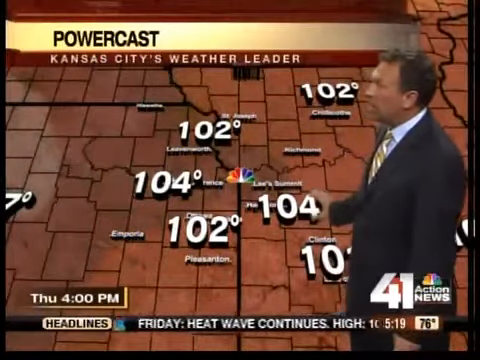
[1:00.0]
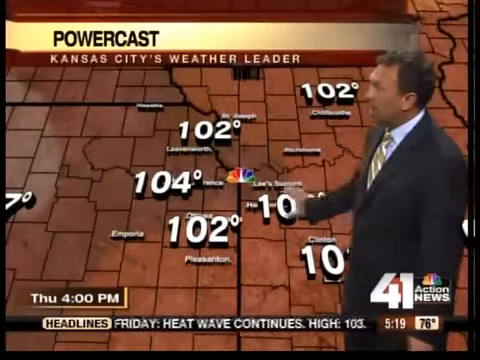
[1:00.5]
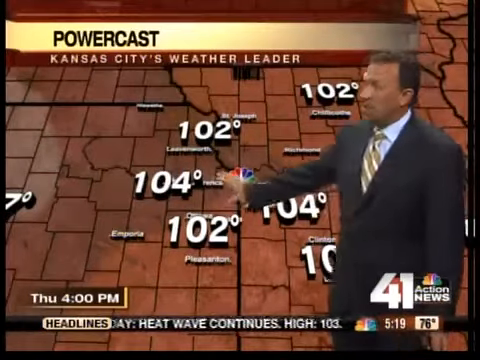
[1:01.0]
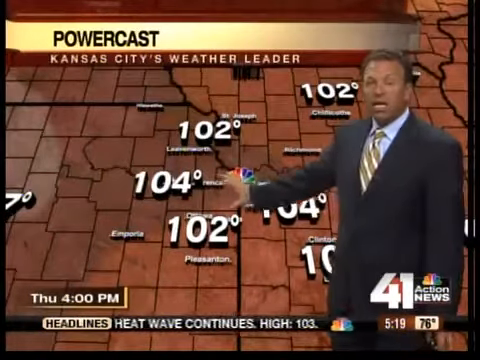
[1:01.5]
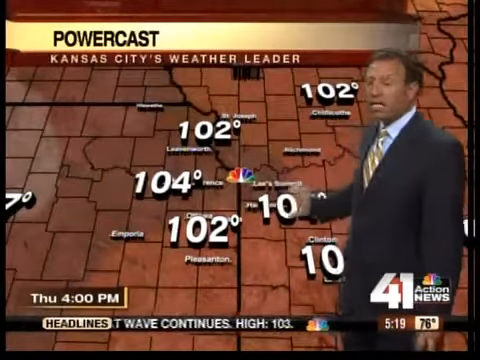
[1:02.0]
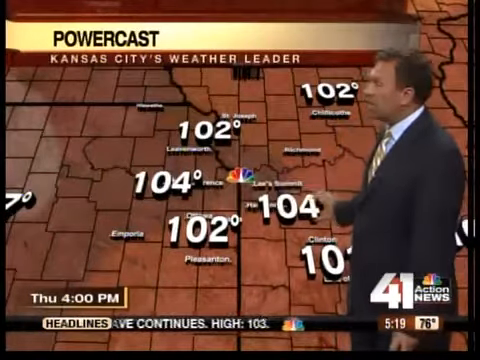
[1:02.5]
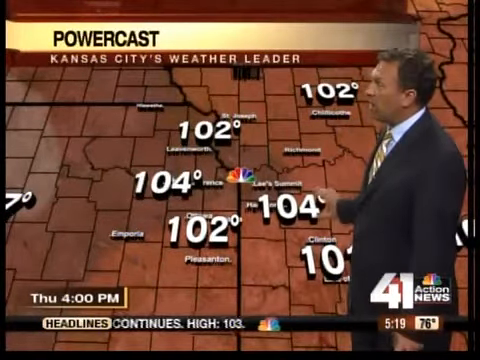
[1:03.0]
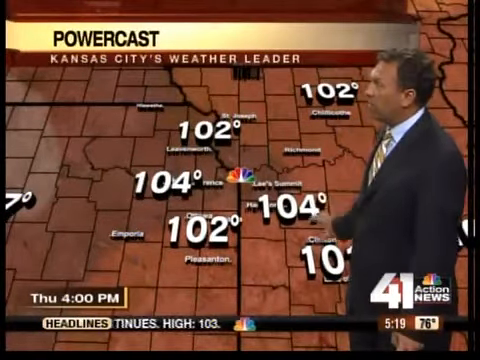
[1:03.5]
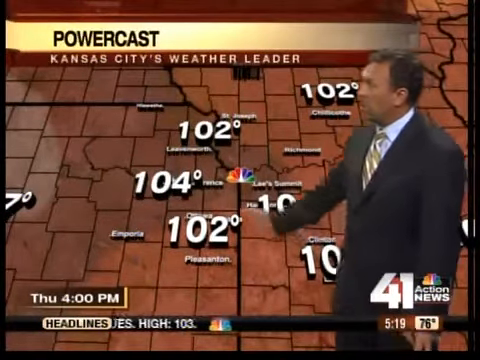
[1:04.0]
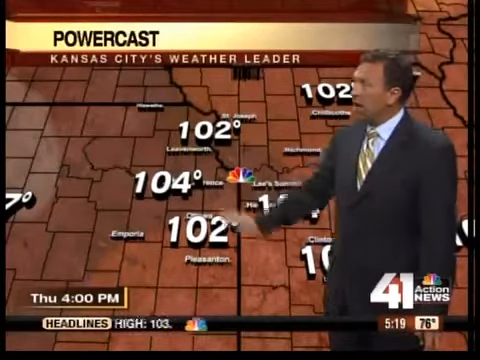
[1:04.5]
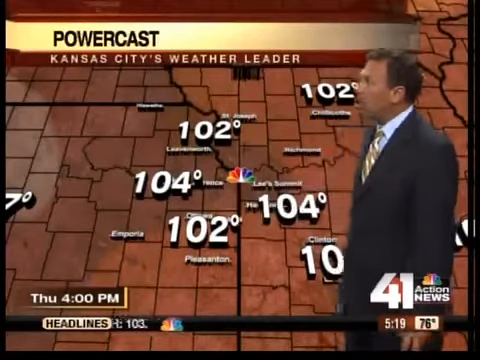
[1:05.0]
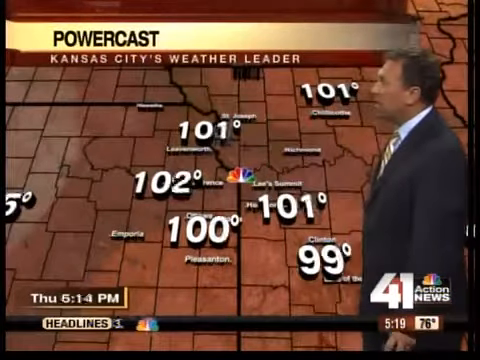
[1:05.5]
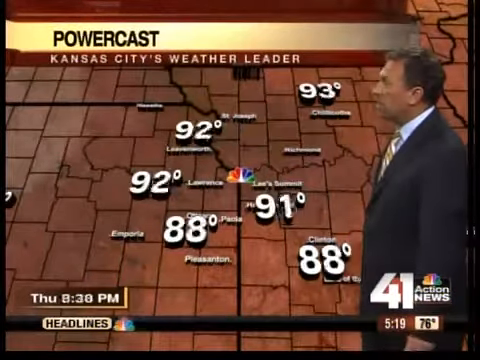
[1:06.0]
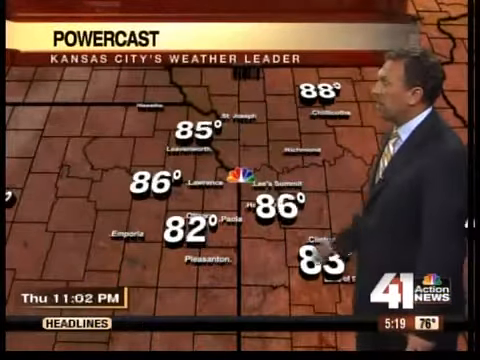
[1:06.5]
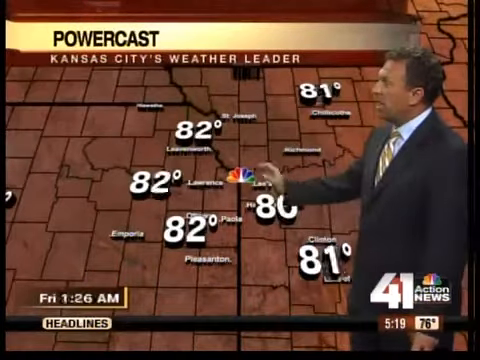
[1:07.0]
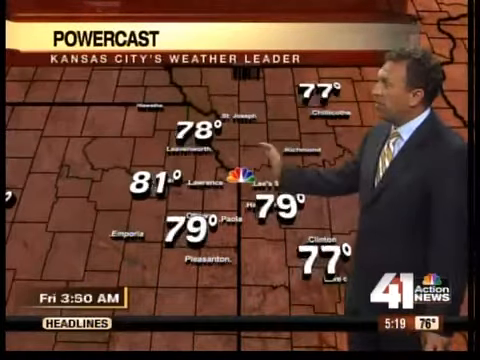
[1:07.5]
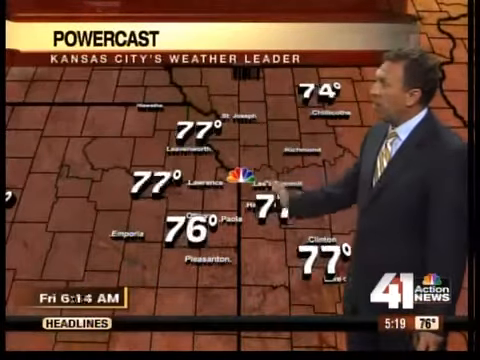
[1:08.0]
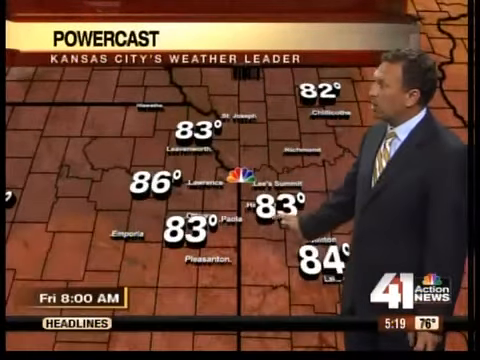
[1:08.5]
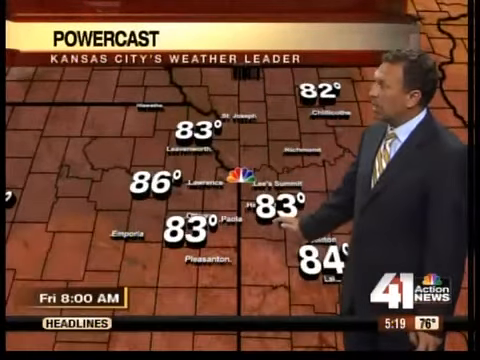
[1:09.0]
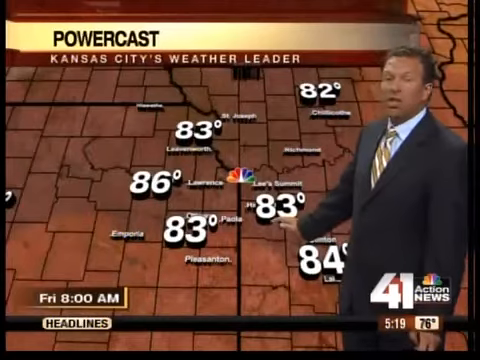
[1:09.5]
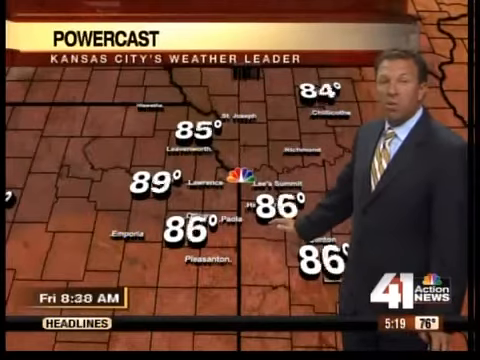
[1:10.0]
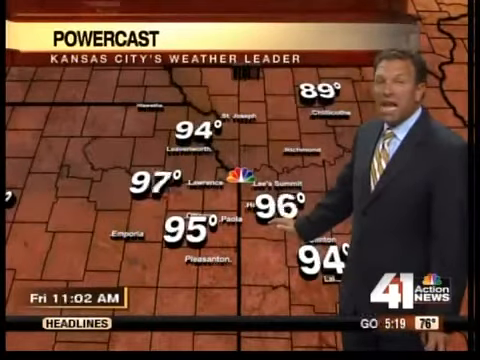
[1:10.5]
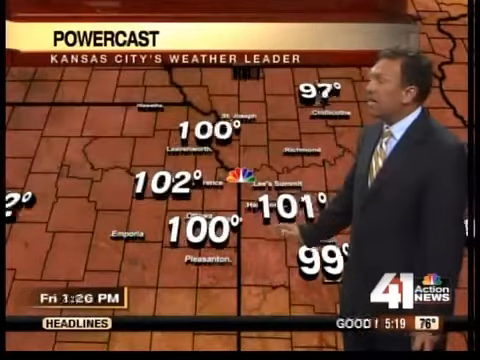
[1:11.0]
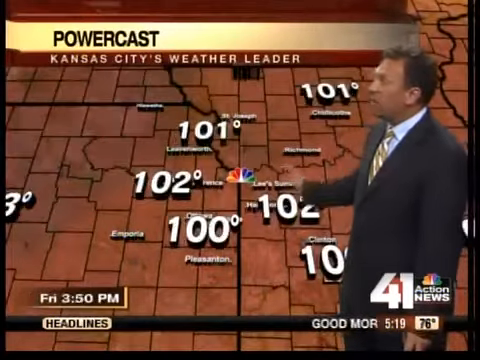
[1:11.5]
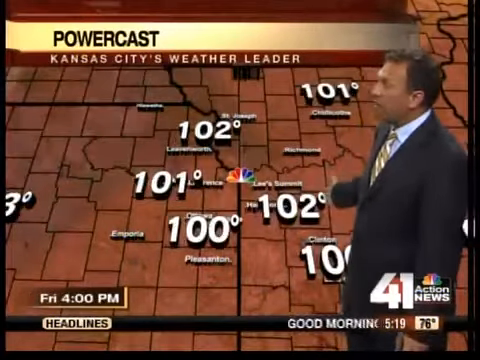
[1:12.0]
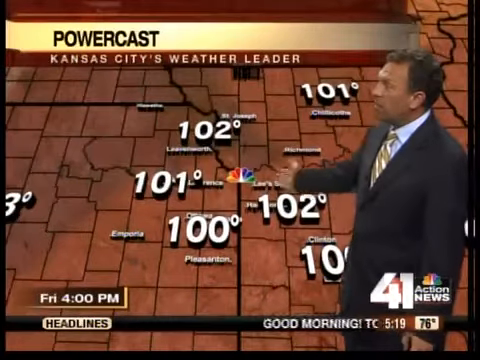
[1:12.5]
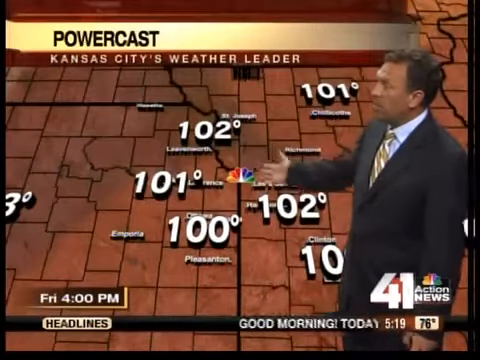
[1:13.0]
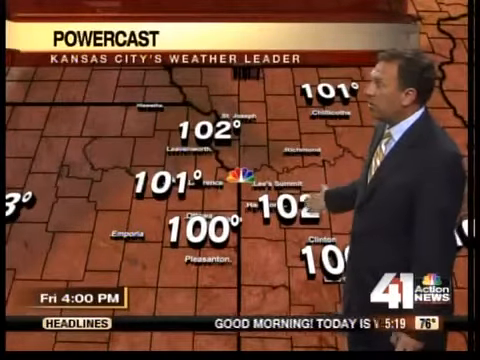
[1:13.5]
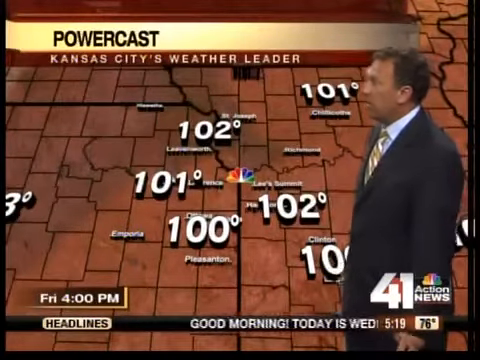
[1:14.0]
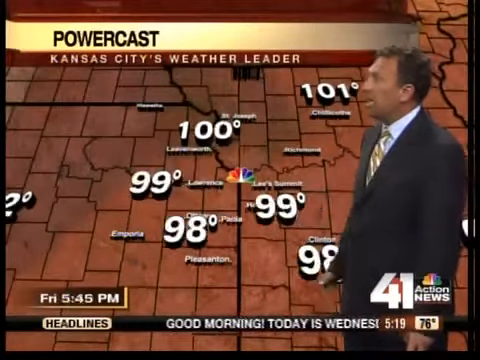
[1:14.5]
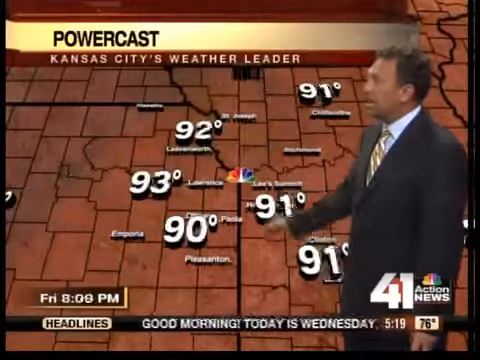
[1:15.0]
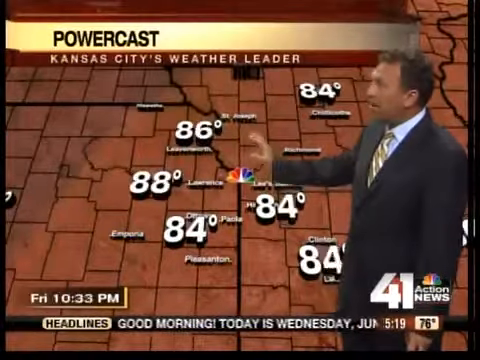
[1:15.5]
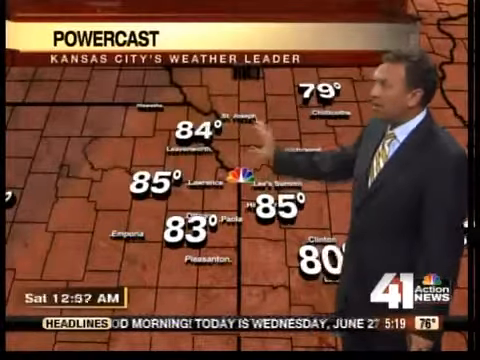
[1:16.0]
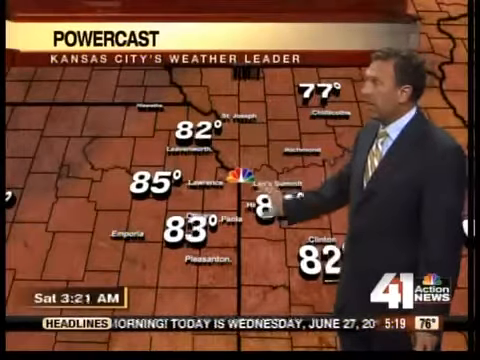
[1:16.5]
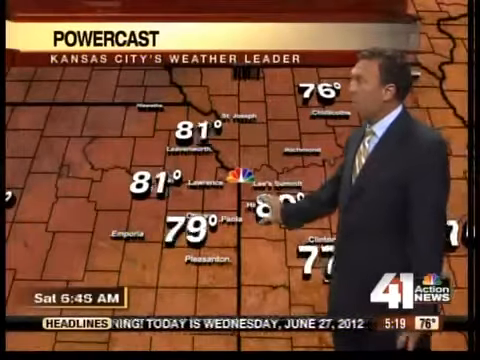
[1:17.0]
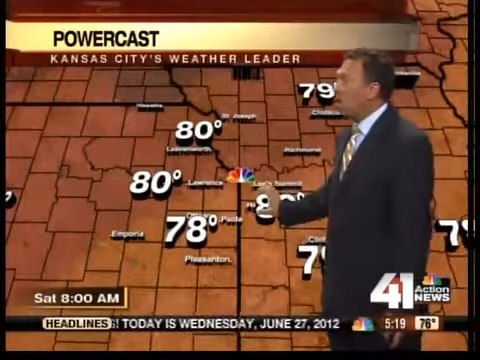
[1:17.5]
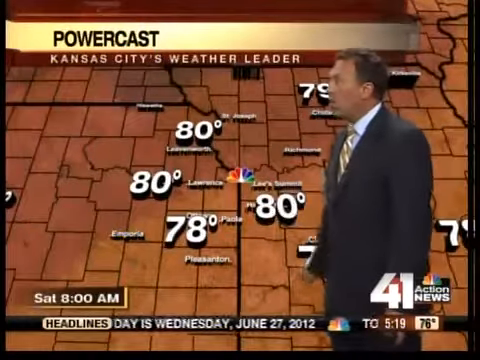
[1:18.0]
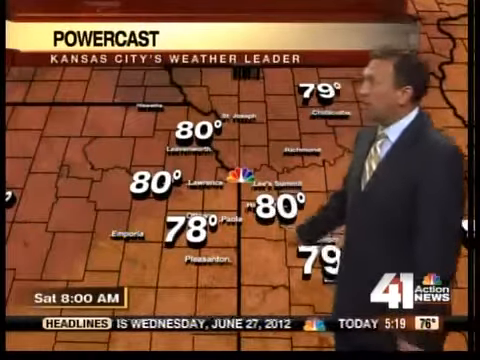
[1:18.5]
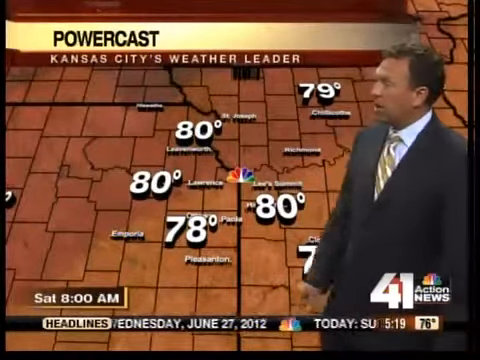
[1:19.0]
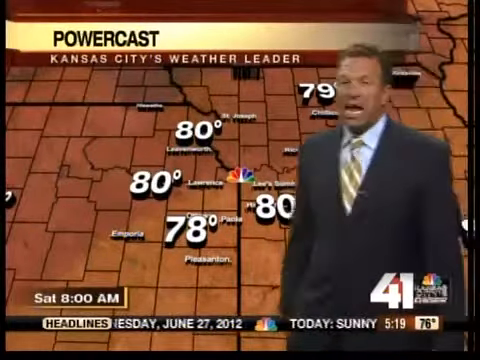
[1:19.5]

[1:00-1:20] The man continues to point out temperatures on the map. He makes a C-shape with his right hand and points at a 104; the lettering showing where that is is too blurry to read. He moves the C-shape to another 104 to the upper left of that one, then back to the original 104 on the right side of the screen, and then once more to the 104 on the left side. The temperatures in the background drop, and he makes a C-shape with his hand again, pointing it to the middle of the screen where the NBC logo is visible. The temperatures then rise again, and he makes a sweeping motion with his right hand from the right of the screen to the left. The temperatures change again and drop a bit, and he makes the C motion with his hand once more, moving it from the top of the screen down to the bottom, then pushes it away from him over the 80 degrees marker. He drops his right hand to his side, turns toward the camera casually and begins to walk, and the camera cuts.